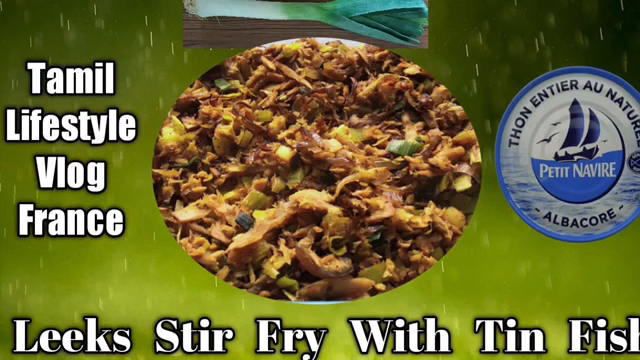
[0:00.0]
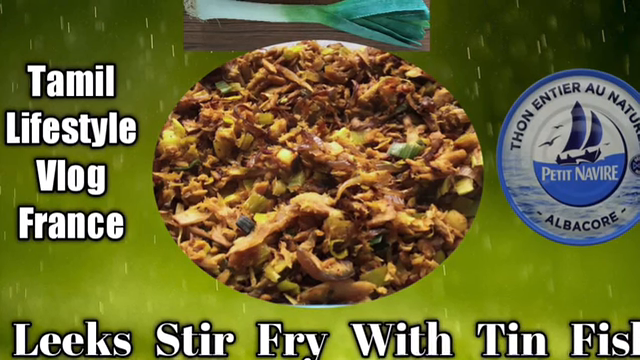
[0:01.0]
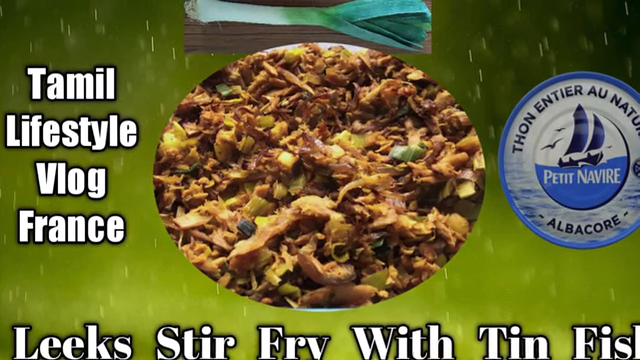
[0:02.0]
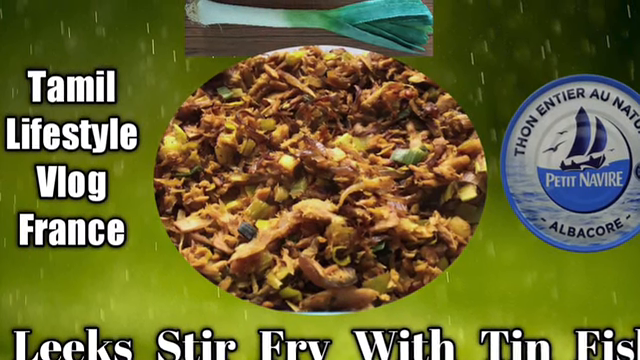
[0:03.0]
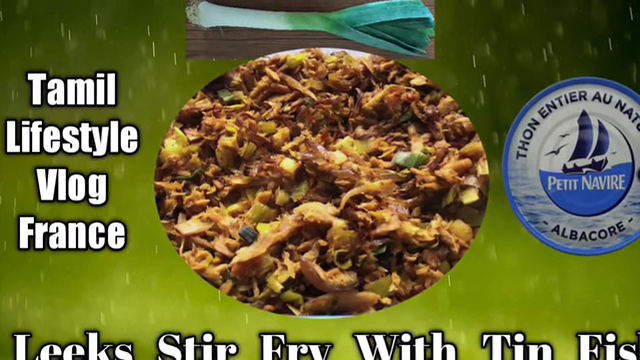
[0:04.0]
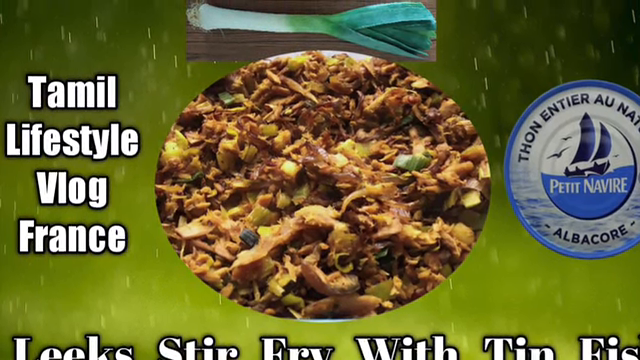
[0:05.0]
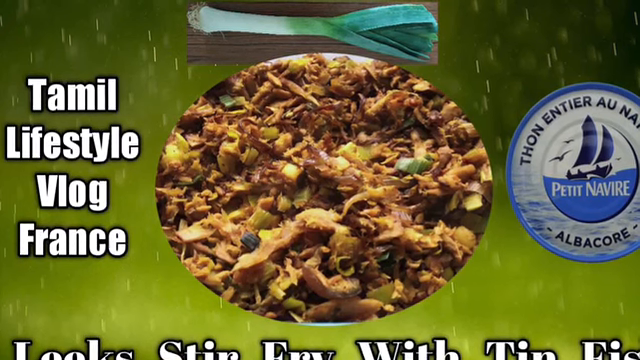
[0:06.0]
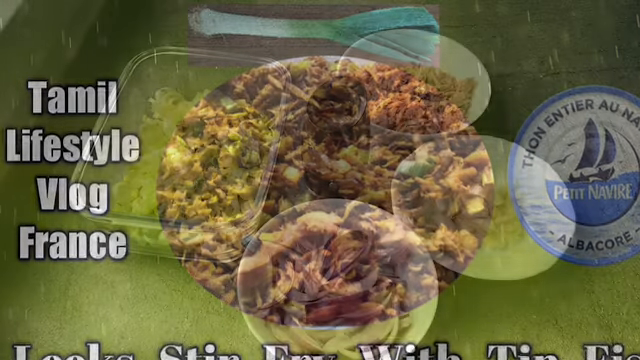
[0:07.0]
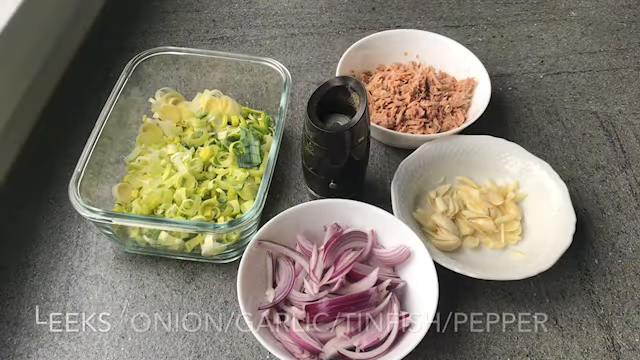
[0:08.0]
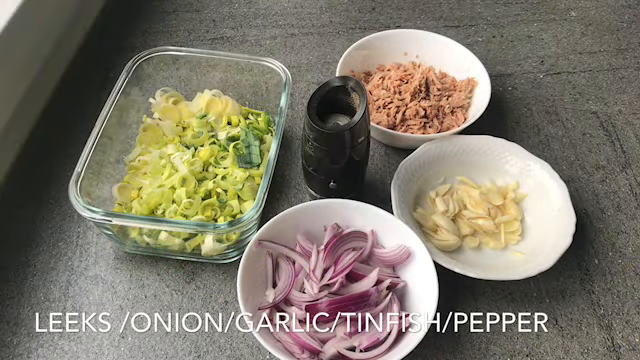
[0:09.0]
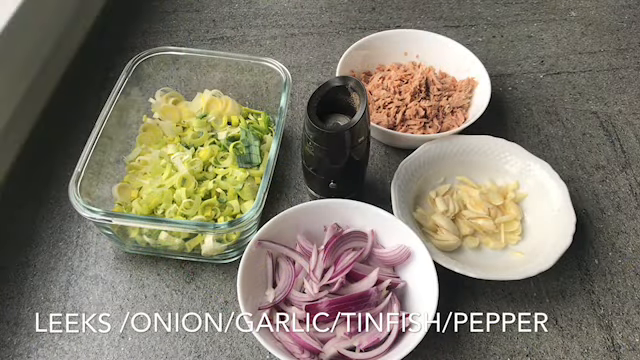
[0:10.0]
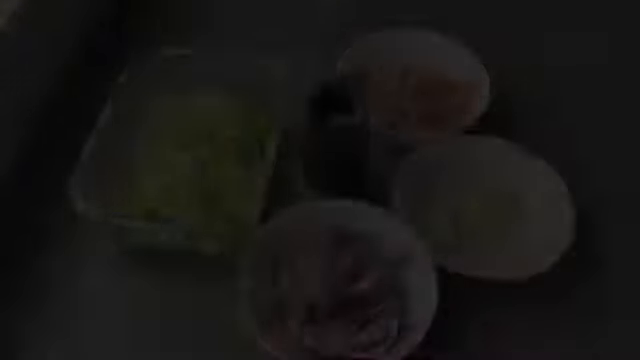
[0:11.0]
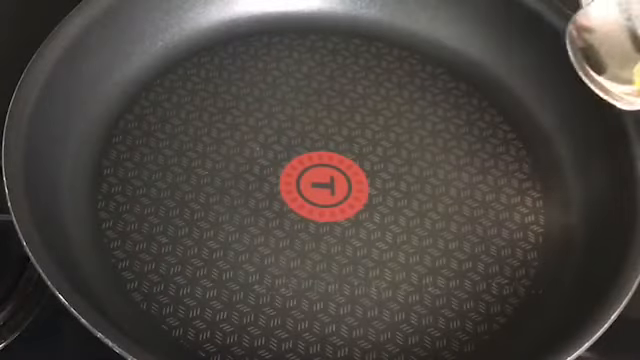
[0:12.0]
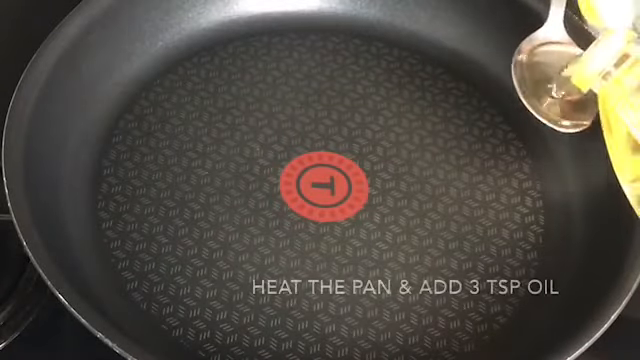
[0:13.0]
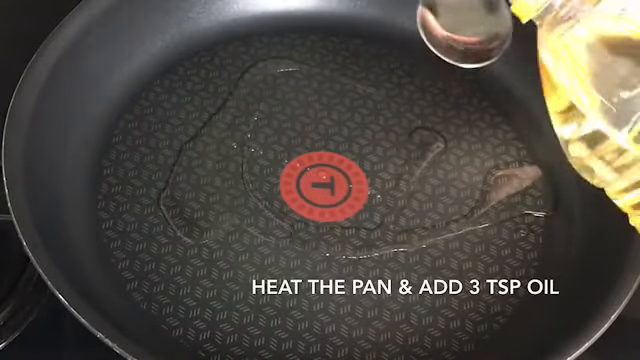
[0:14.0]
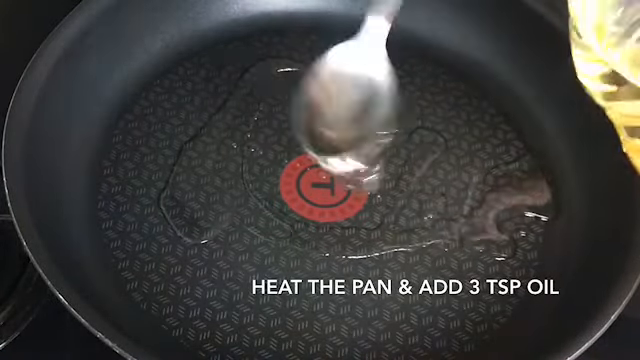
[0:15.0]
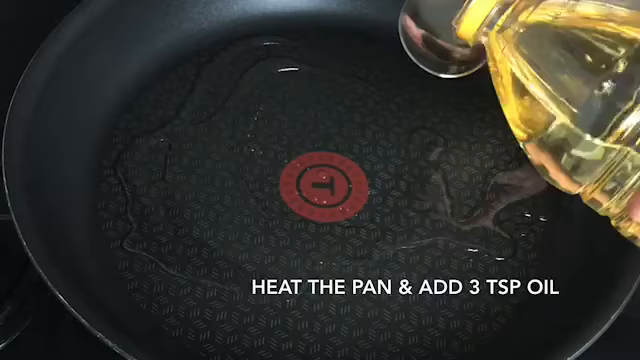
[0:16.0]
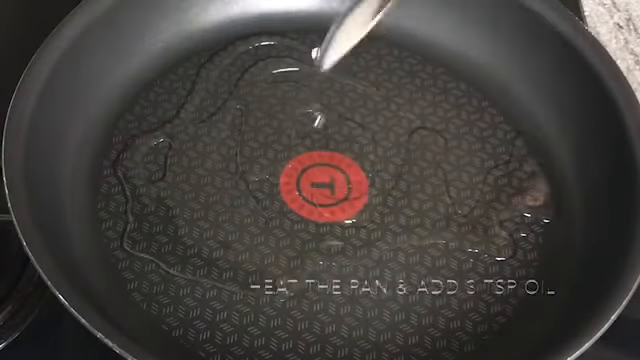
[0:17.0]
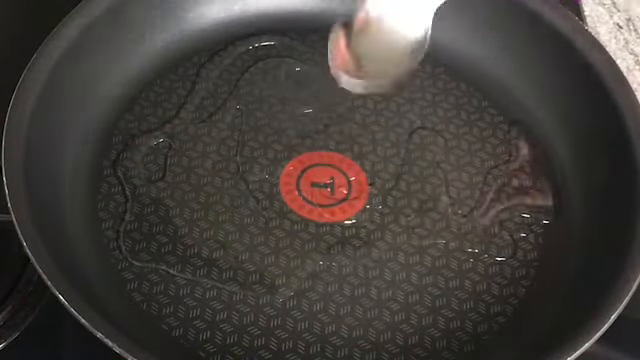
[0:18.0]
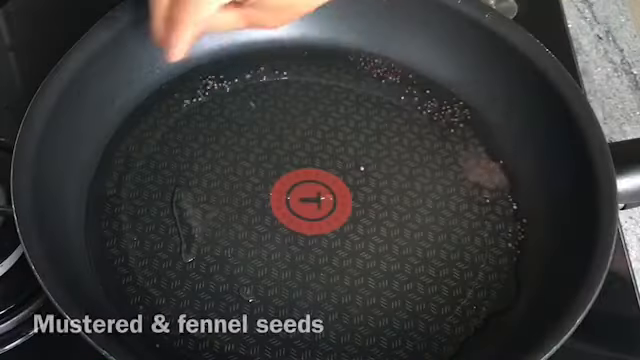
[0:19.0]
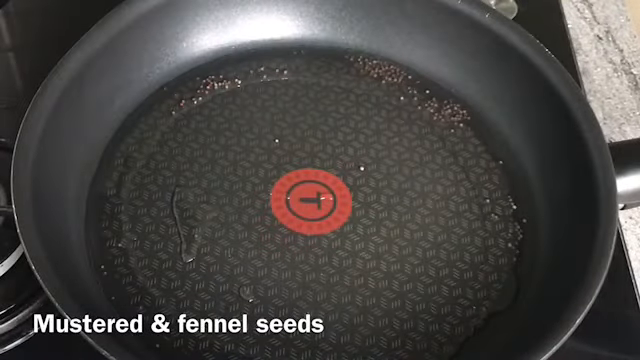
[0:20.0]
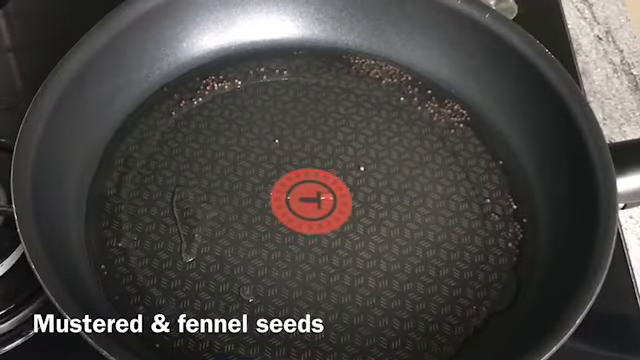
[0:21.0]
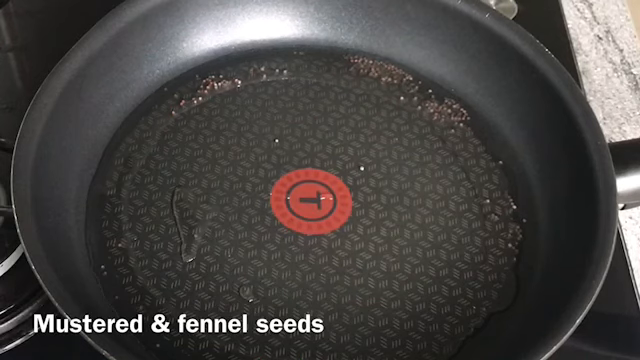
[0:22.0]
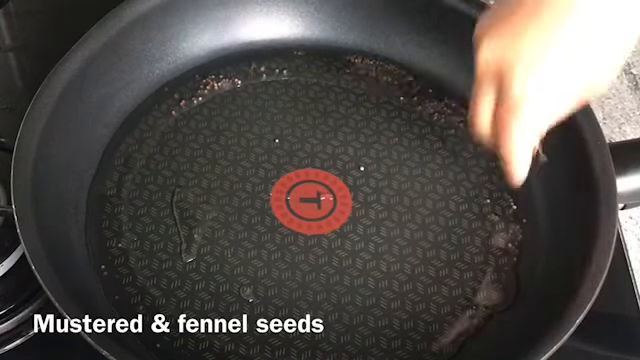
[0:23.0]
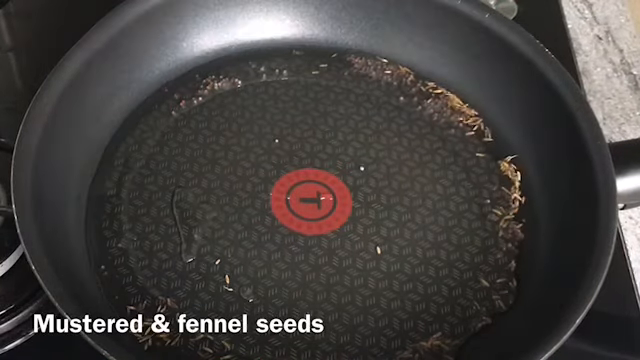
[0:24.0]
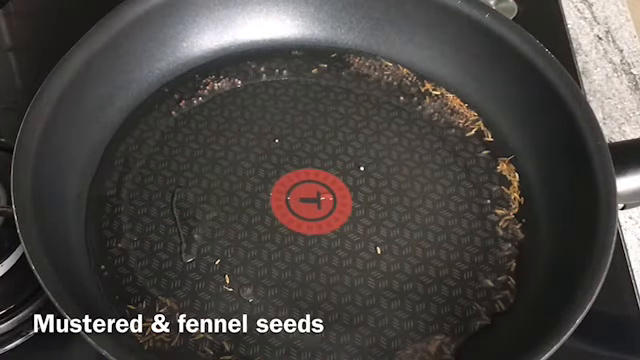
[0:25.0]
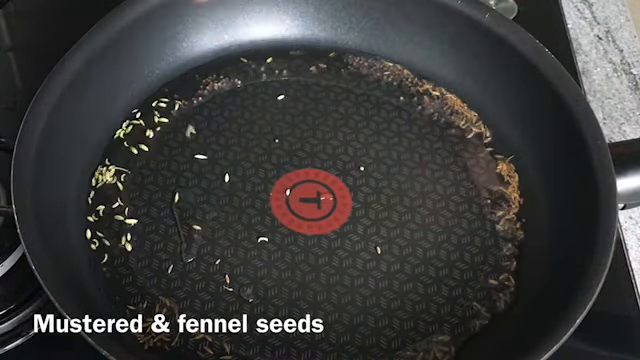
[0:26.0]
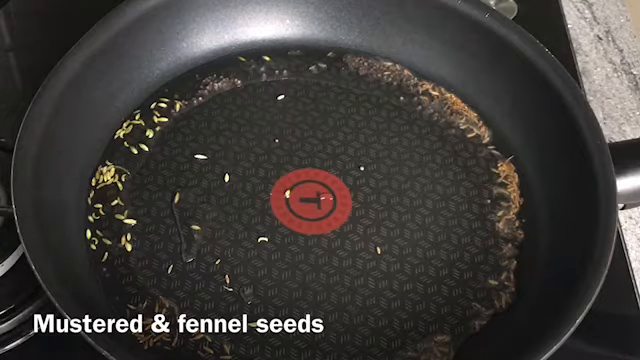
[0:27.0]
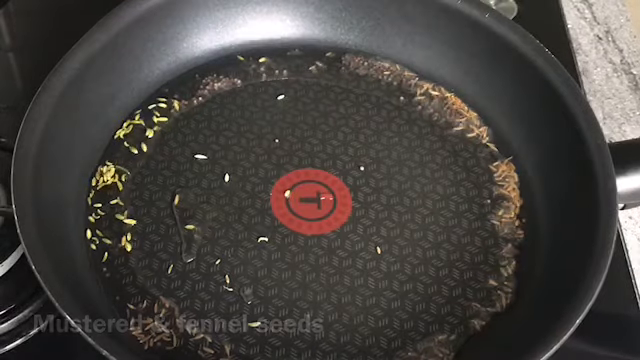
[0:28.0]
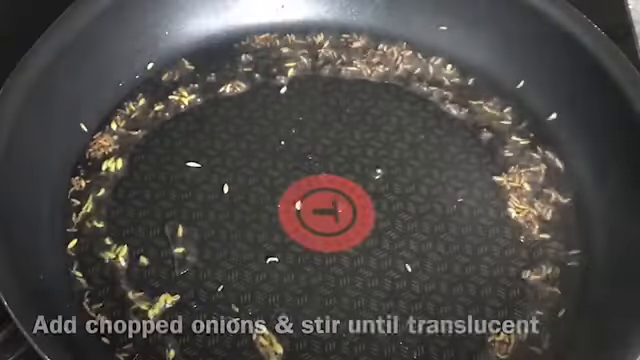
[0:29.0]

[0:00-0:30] An intro shows that a stir-fry is being made. Raw vegetables are in bowls: red onions, some green vegetable, maybe lentils, something tan that cannot be made out, and what looks like maybe some chicken. On-screen text reads "Heat the pan and add three teaspoons of oil", and oil is put into a pan with a spoon in a kind of swirly fashion. Text then says "Mustard and fennel seeds", and the mustard and fennel seeds are sprinkled around by hand, dropped into the pan.